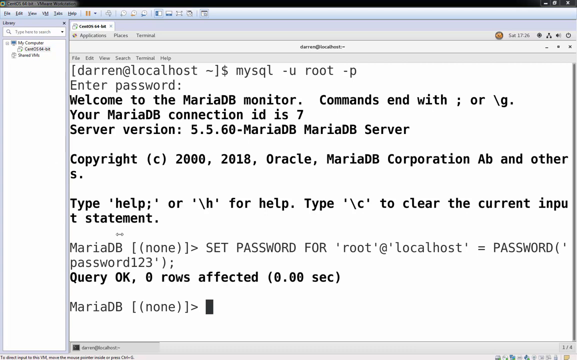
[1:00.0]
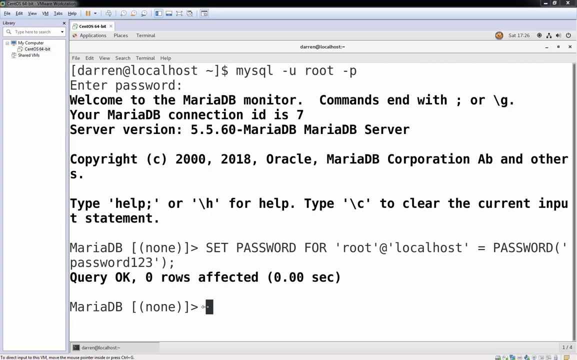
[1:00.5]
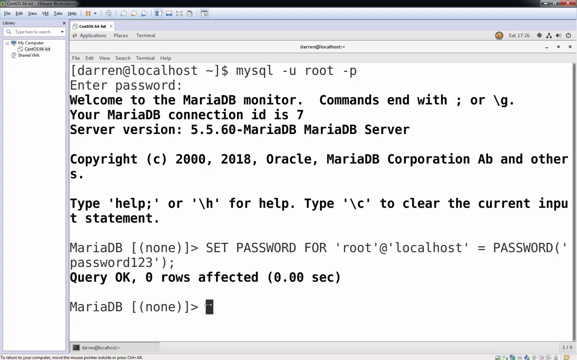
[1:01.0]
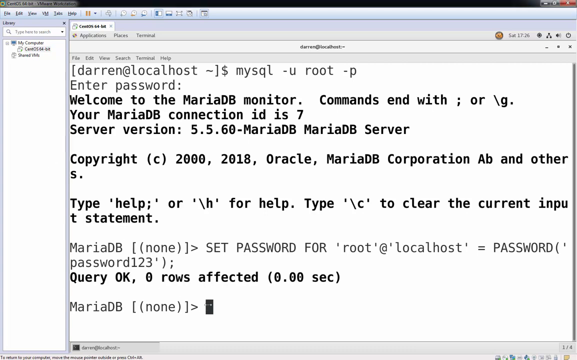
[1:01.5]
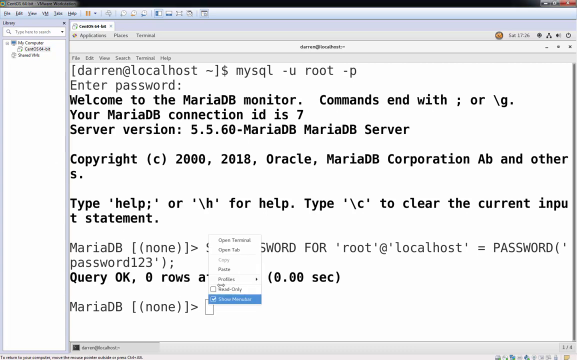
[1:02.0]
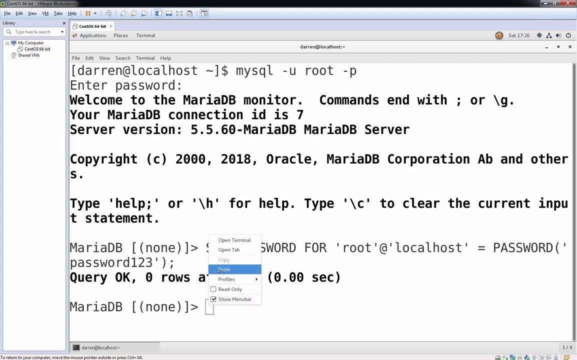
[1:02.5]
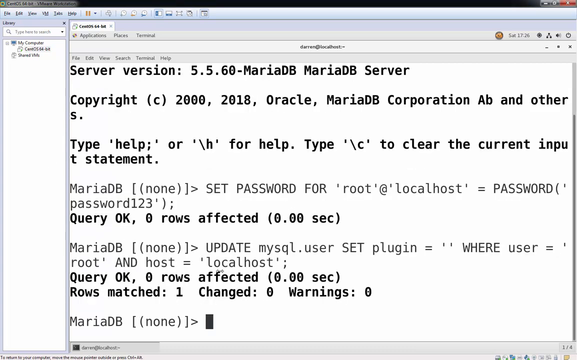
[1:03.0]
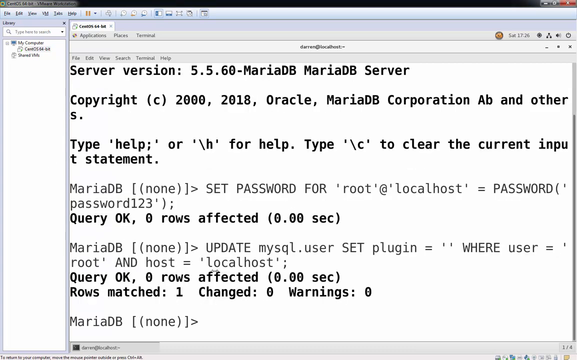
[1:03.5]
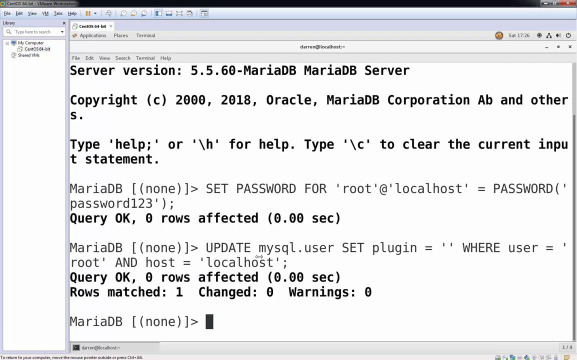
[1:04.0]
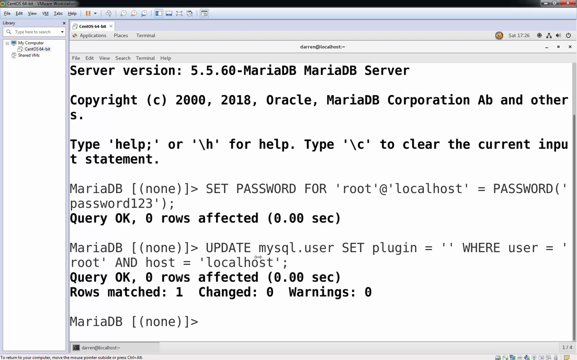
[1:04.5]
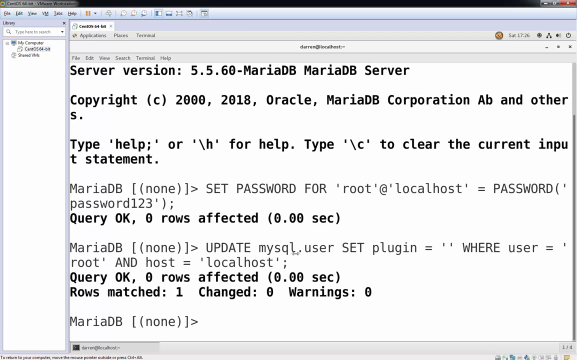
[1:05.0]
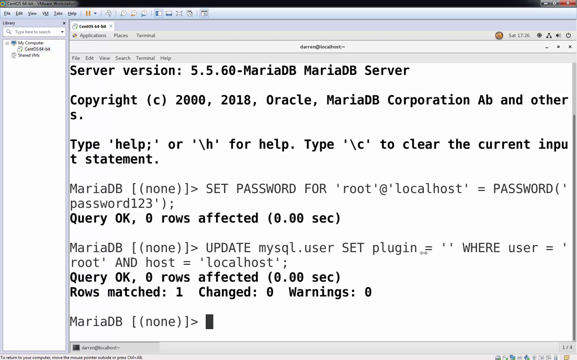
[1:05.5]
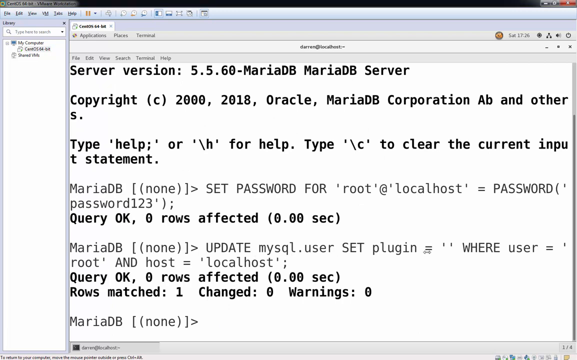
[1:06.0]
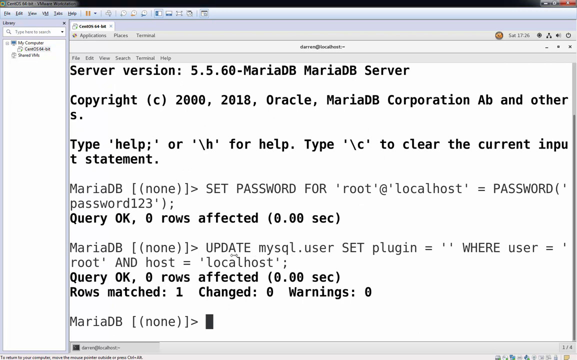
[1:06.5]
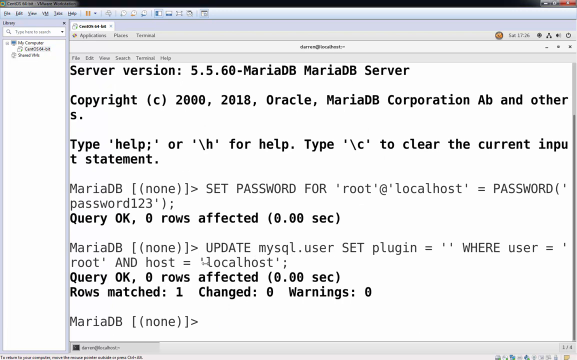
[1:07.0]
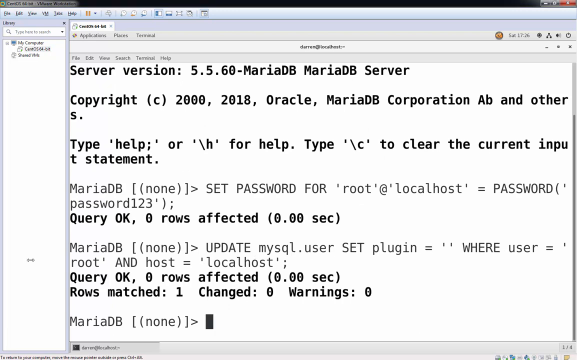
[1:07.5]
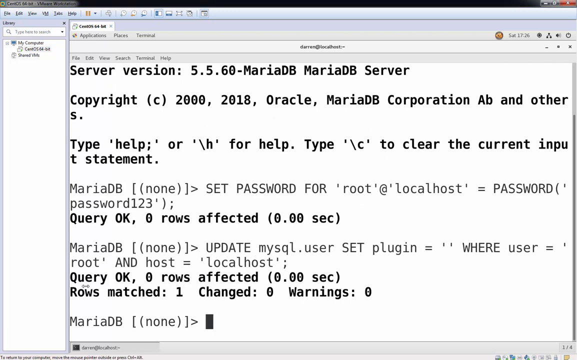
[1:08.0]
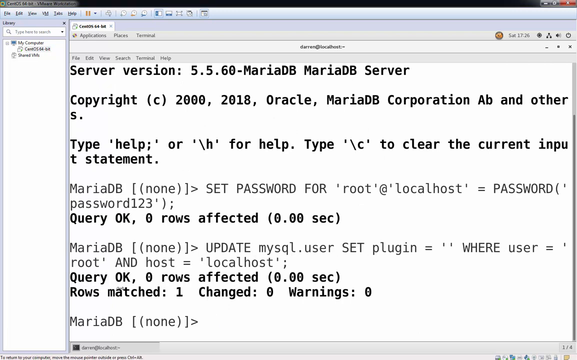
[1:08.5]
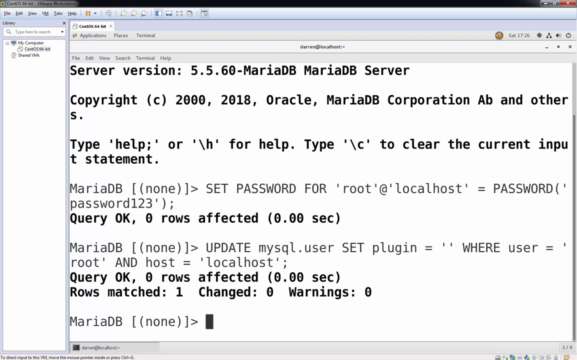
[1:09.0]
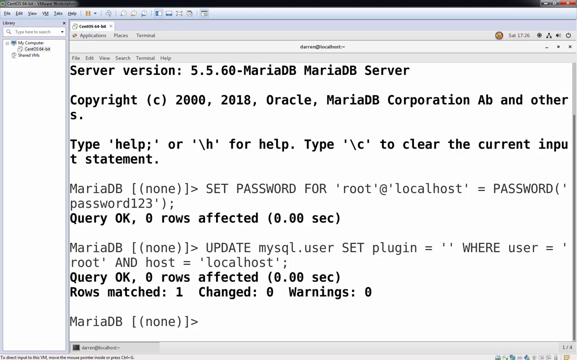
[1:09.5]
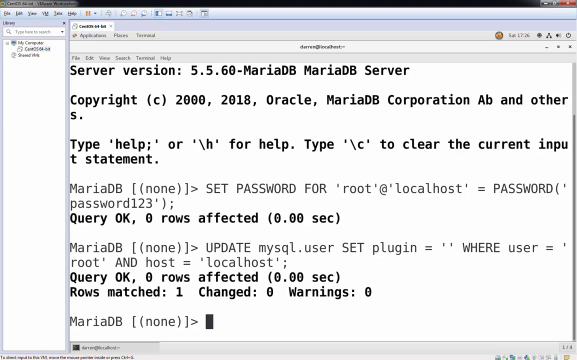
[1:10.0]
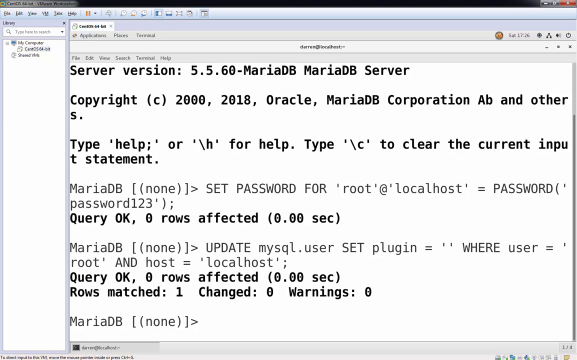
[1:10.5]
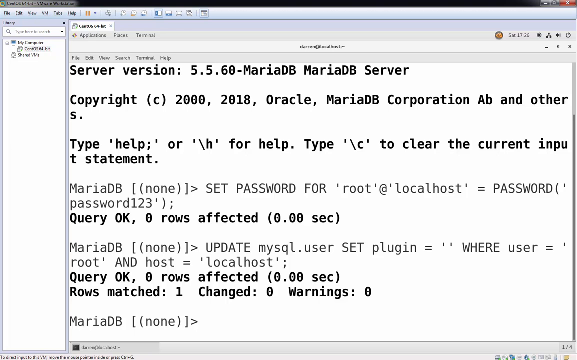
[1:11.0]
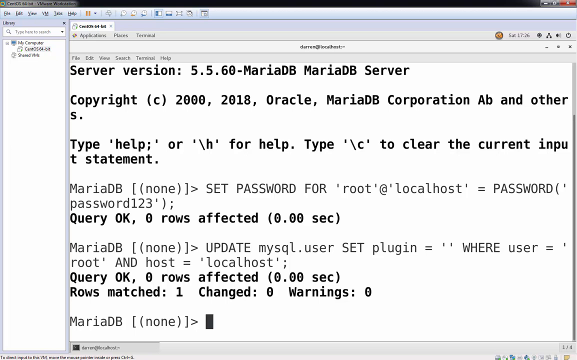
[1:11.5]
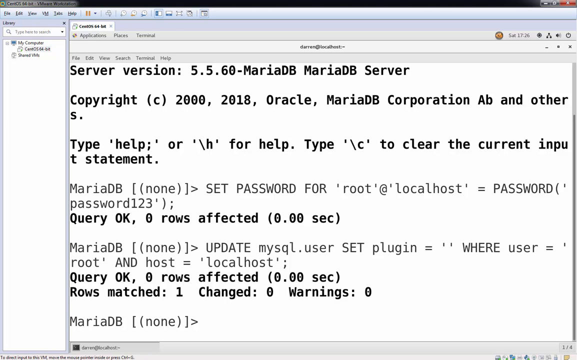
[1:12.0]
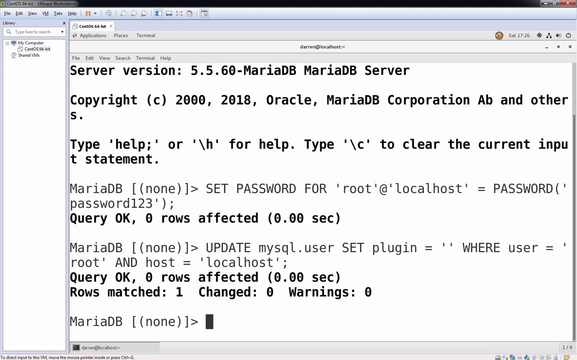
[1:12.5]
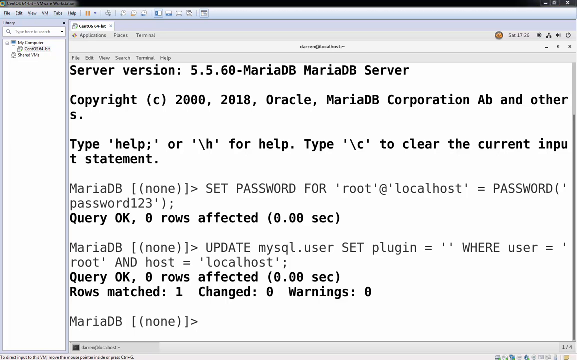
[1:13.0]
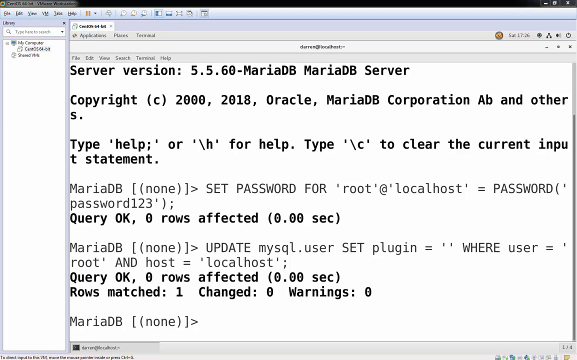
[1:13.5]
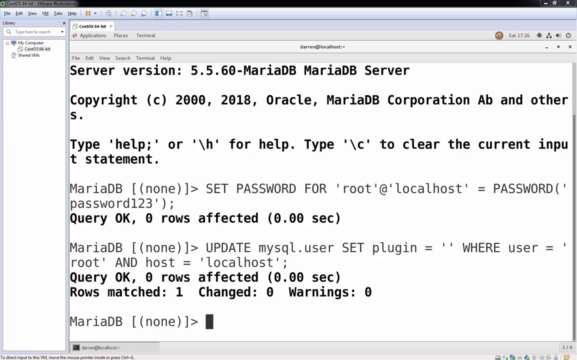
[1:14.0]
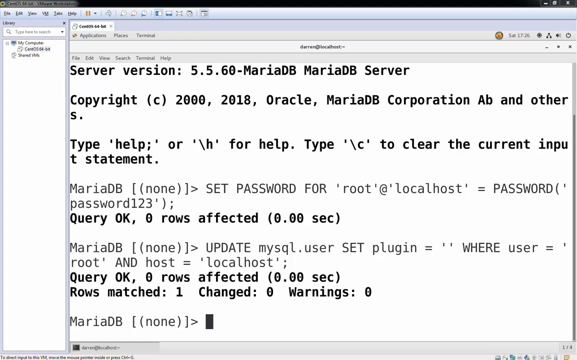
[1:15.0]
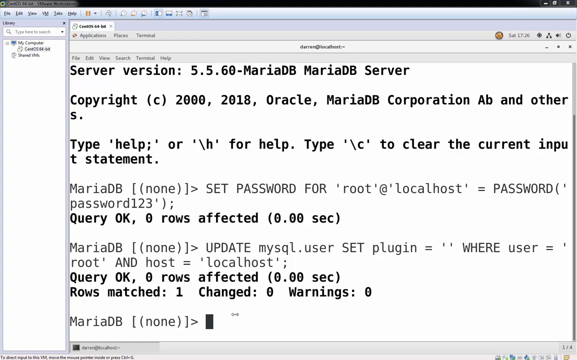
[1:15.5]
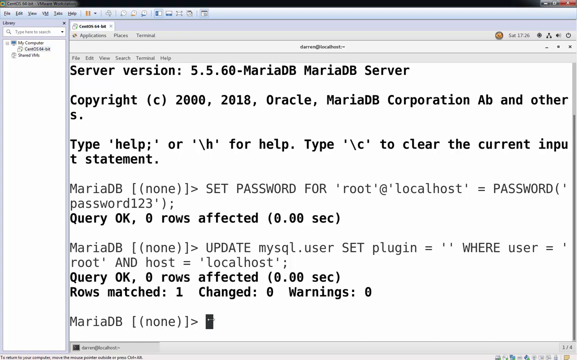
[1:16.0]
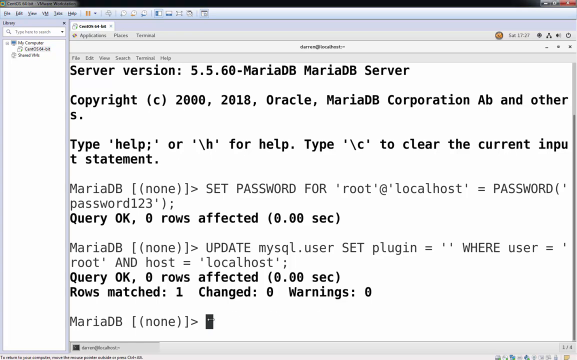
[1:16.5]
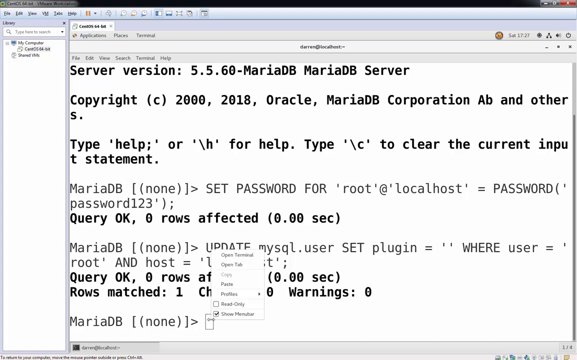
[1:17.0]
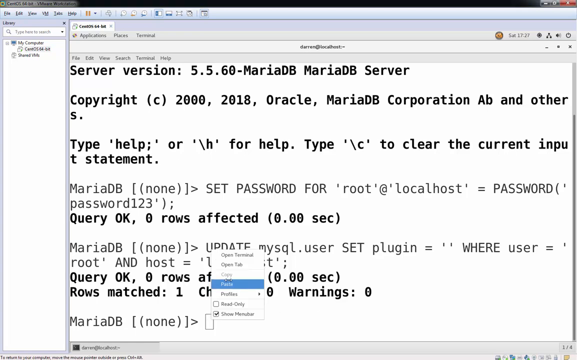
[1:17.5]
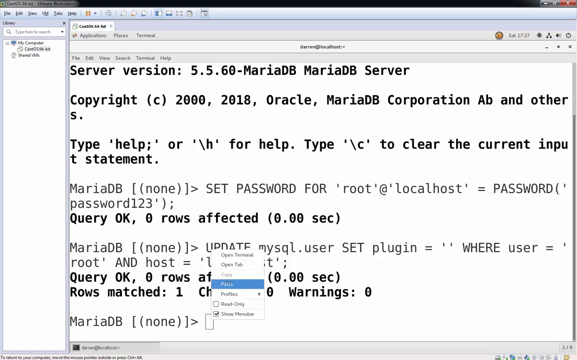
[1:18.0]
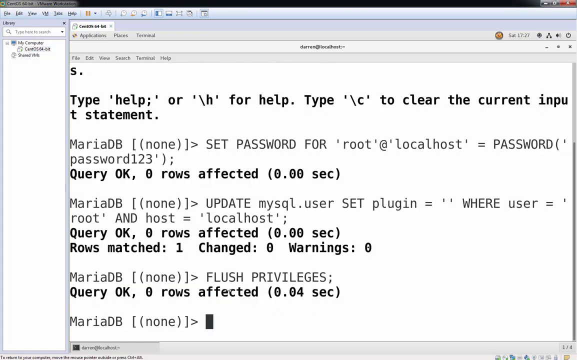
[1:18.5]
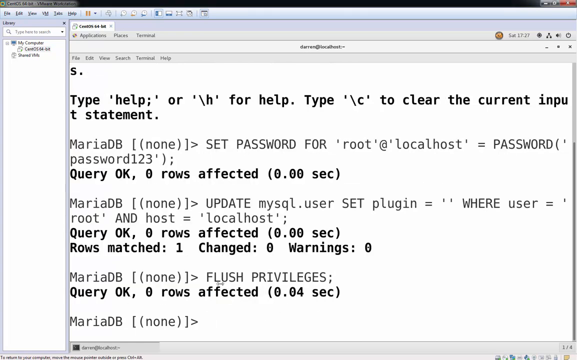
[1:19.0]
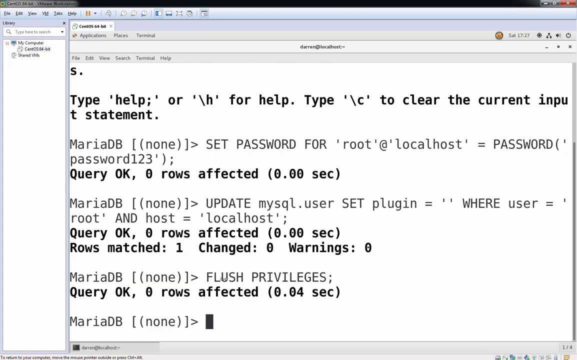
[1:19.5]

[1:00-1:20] In the same program, the rectangle is clicked and paste is chosen again. Another line appears after the "MariaDB" prompt with "none" in brackets and parentheses: "update mysql.user set plugin = "" where user = root and host = localhost;". Bold letters then read "query okay, zero rows affected (0.00 sec)", followed by "rows matched: 1 changed: 0 warnings: 0". The MariaDB prompt with "none" appears again with the black square blinking, until it is clicked and paste is chosen again. A line after the MariaDB prompt reads "flush privileges;" followed by "query okay, 0 rows affected (0.4 sec)", and then the MariaDB prompt appears again.